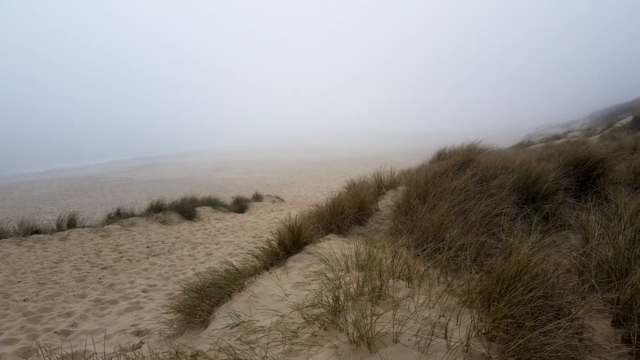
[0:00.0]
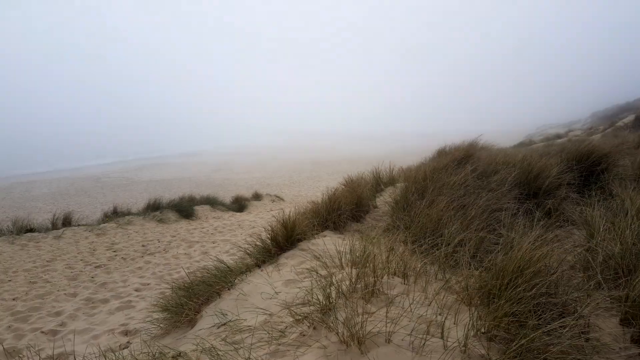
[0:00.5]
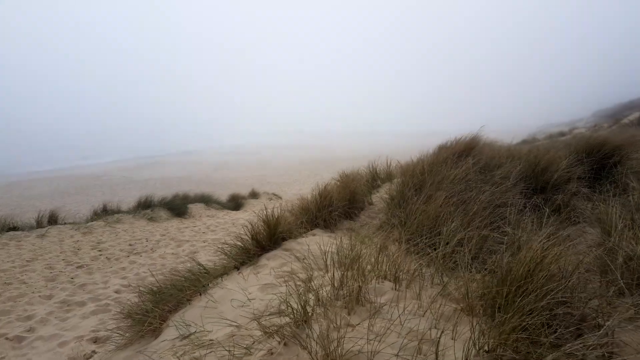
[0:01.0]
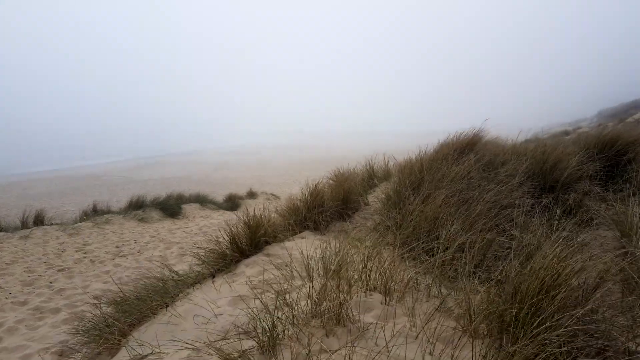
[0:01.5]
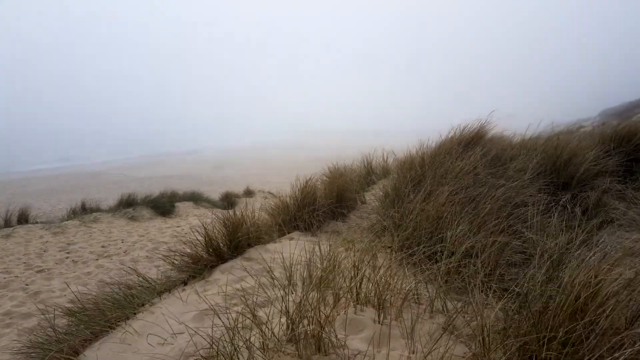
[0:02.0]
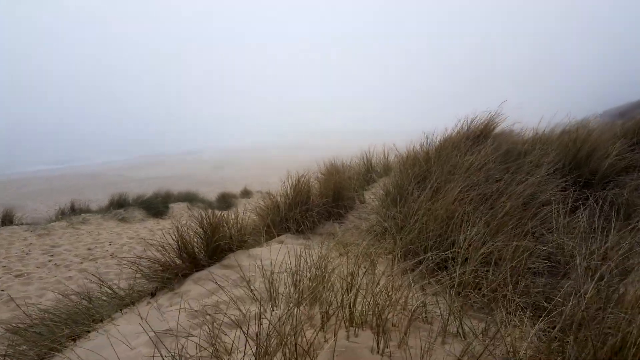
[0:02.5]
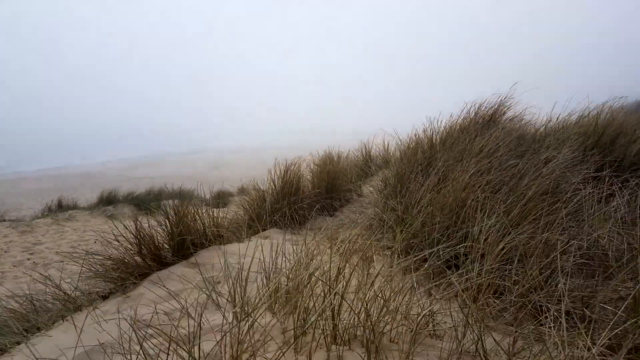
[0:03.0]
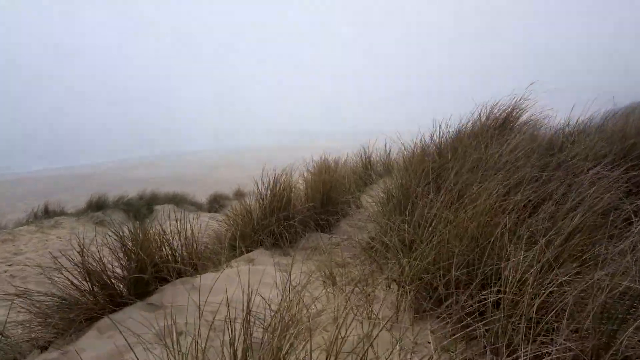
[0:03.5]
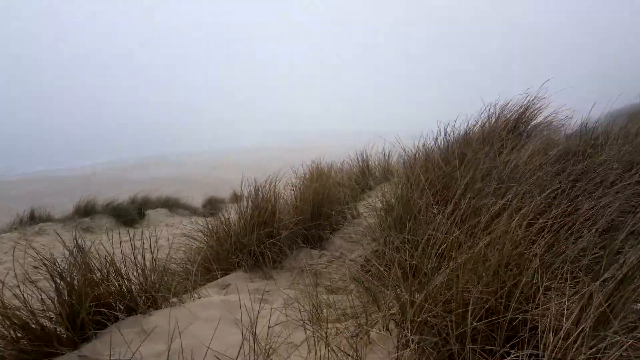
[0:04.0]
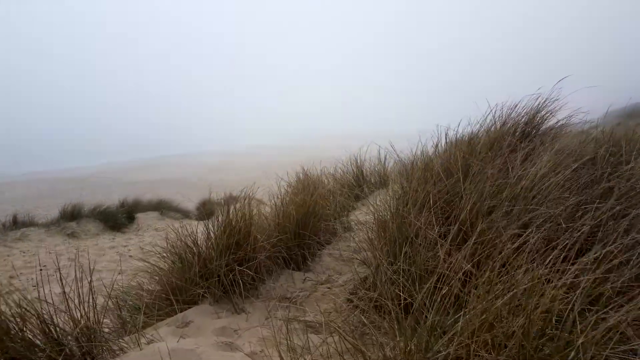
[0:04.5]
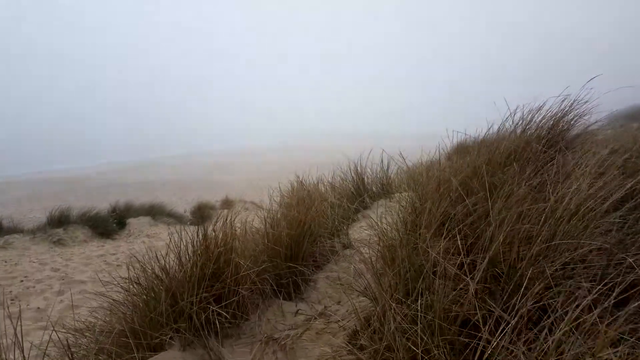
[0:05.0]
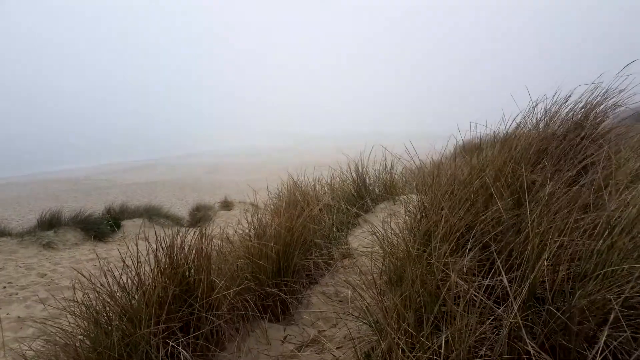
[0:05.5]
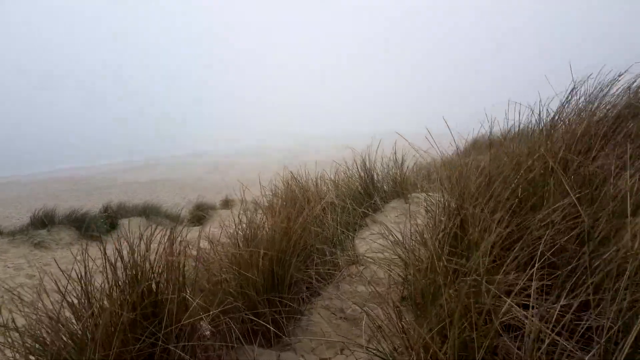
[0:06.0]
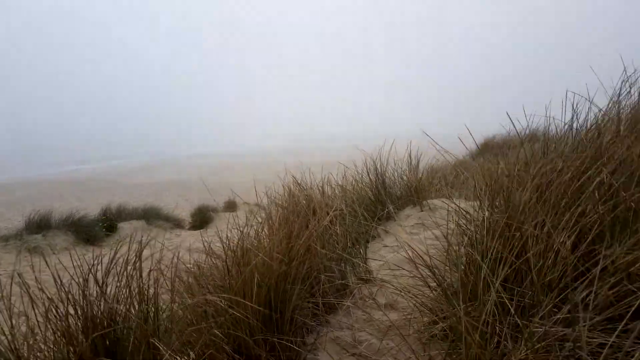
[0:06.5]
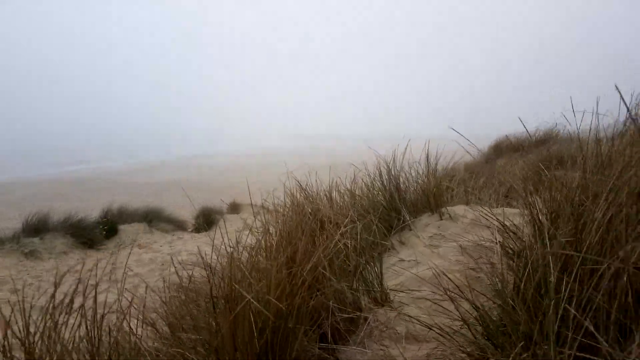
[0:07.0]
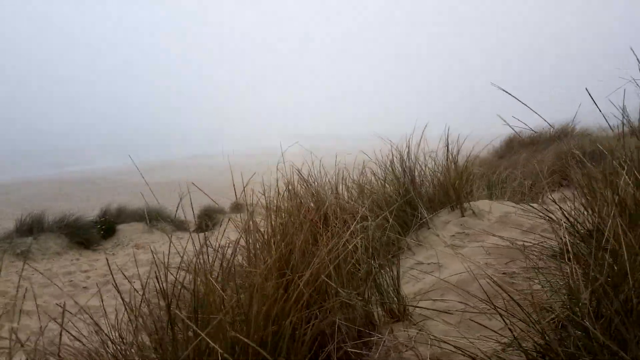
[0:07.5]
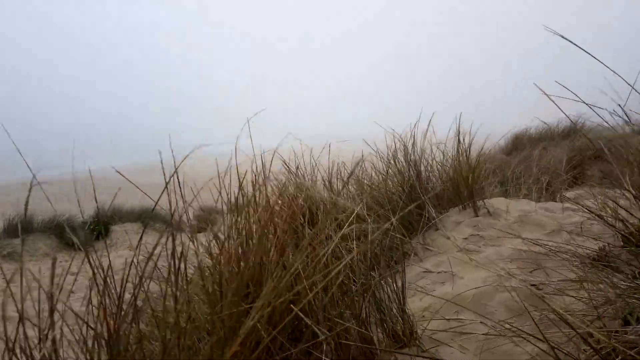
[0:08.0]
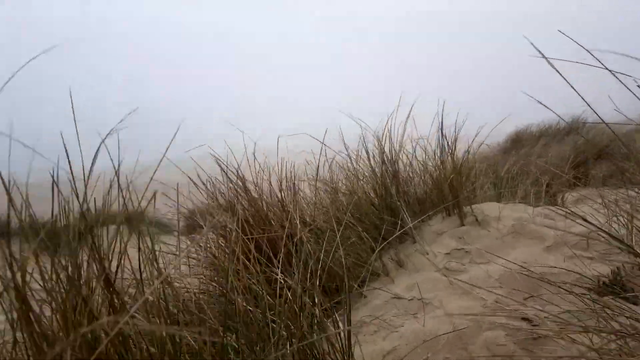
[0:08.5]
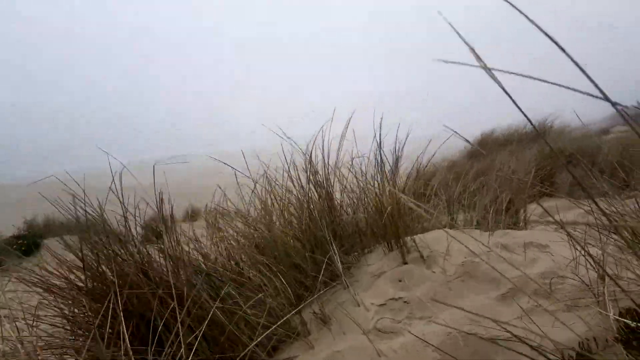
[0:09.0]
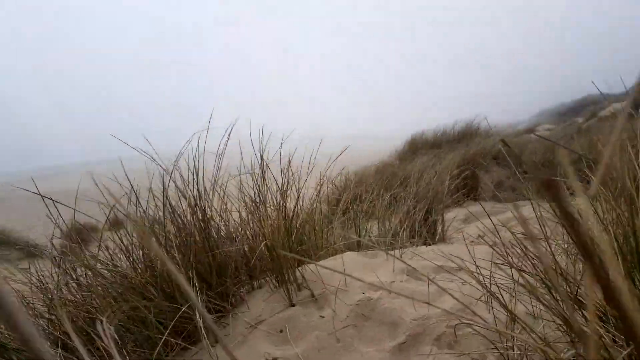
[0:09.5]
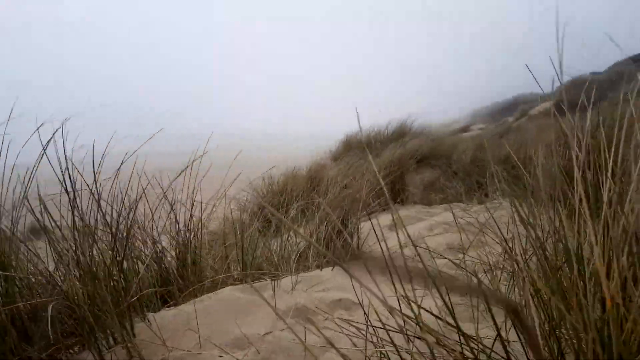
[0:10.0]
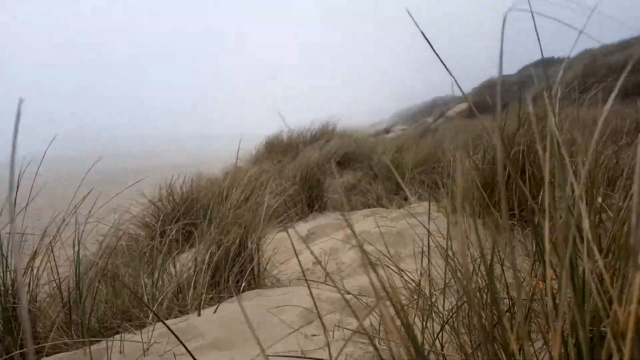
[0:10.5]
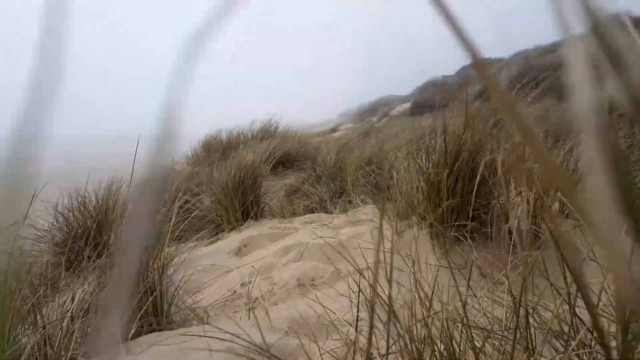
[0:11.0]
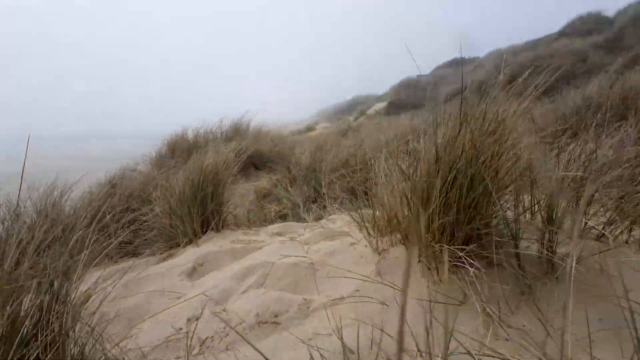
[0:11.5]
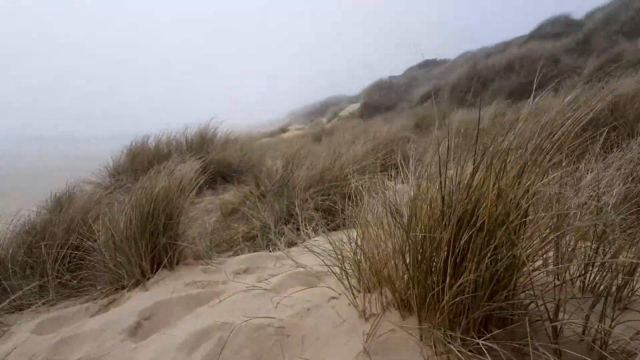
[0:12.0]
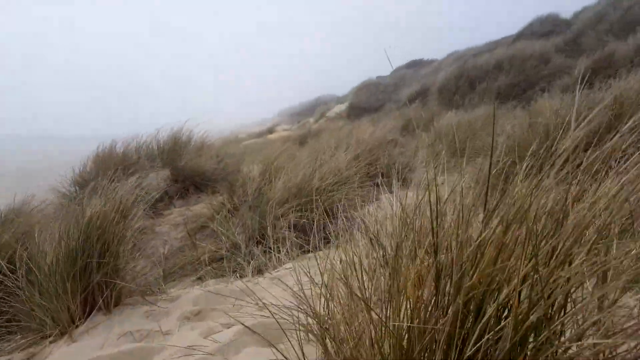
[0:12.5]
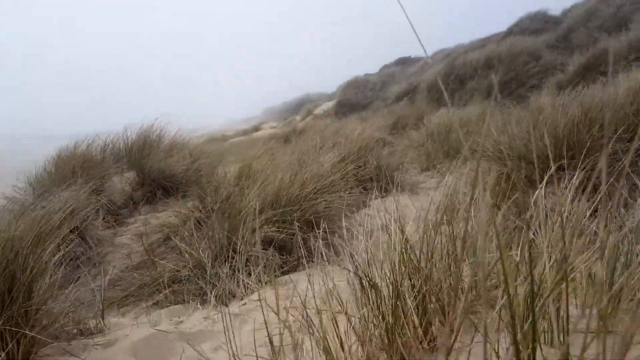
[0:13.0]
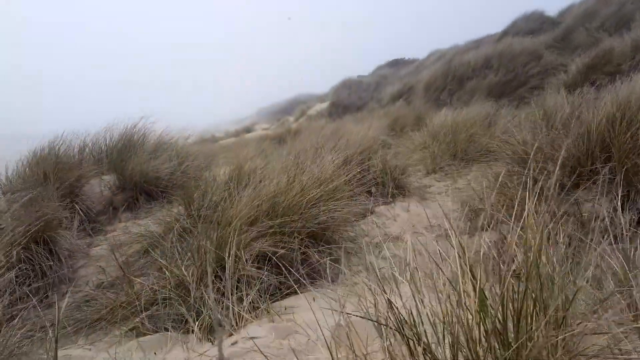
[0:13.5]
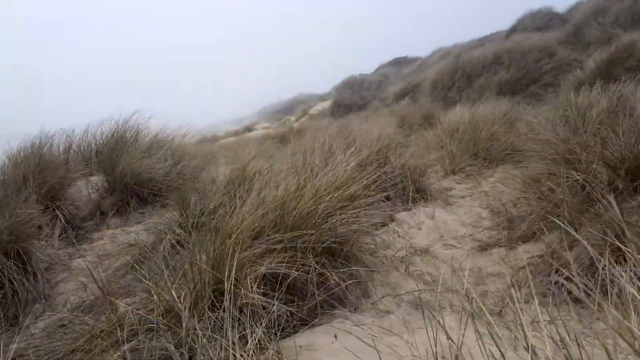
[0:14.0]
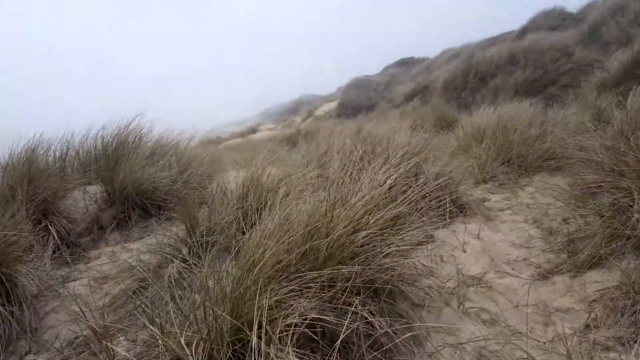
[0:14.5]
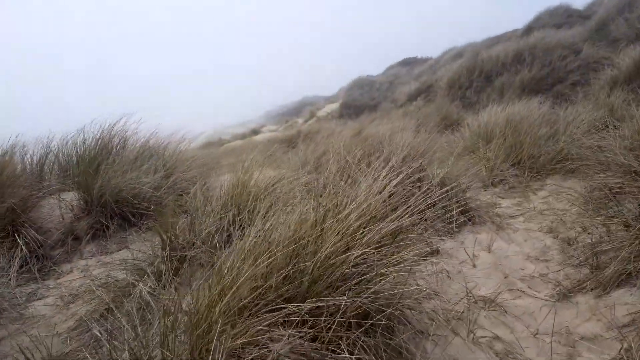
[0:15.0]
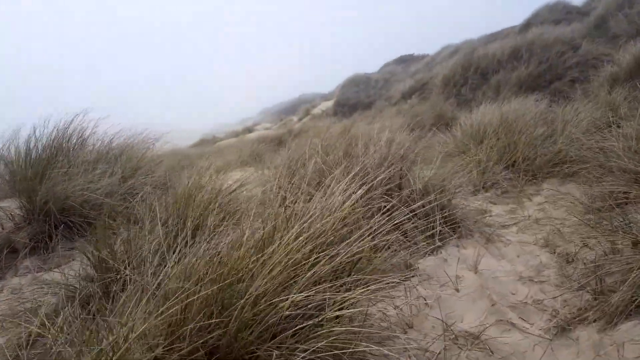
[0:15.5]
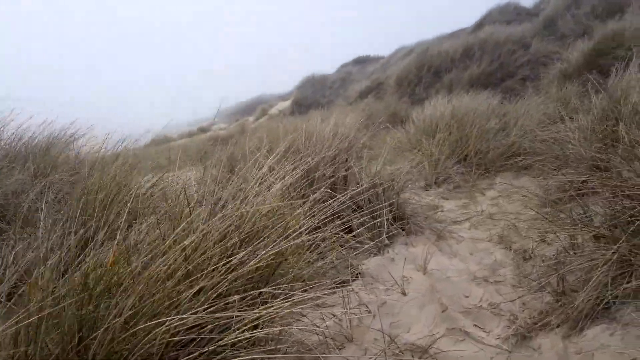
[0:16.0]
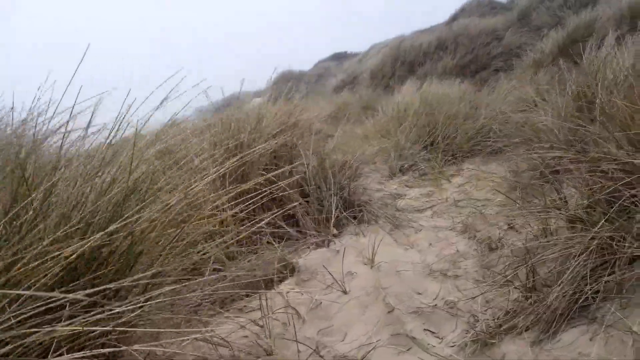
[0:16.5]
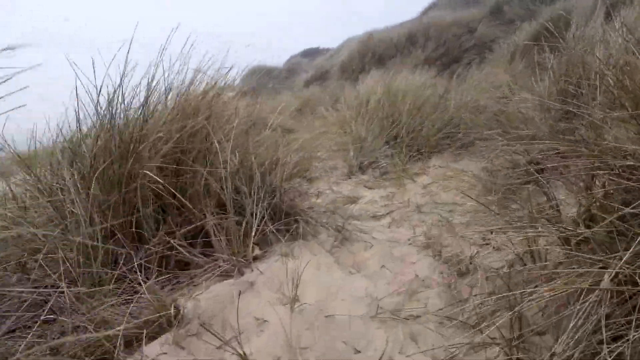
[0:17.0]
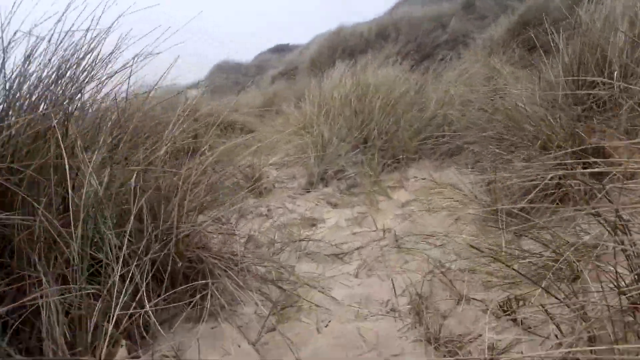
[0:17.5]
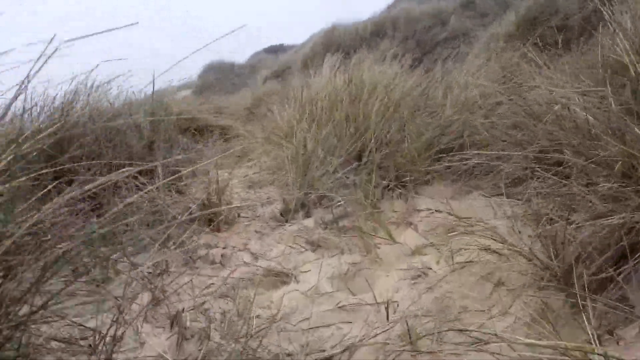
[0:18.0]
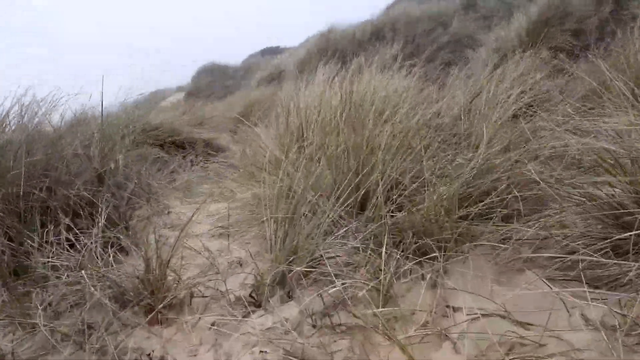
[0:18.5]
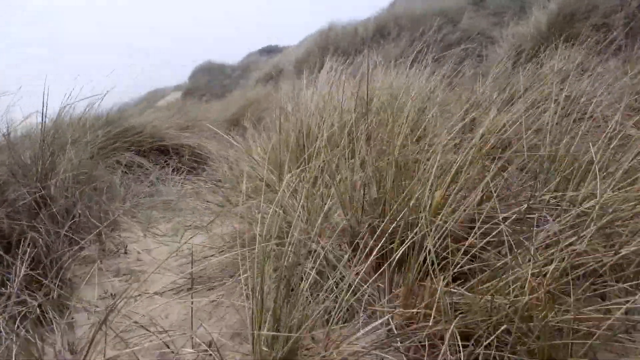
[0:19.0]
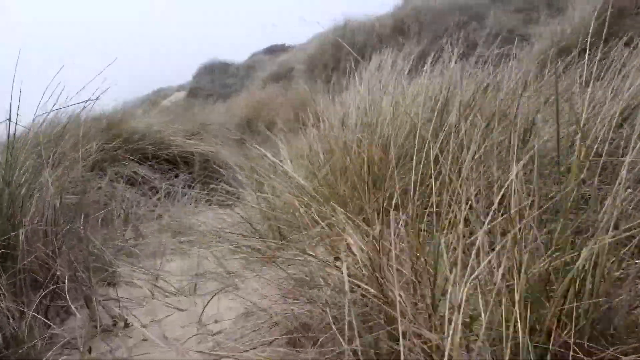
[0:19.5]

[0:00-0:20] The video opens on a sandy beach with no clear horizon, though some waves are possibly visible in the background. It is an extremely foggy, grey day and the mist is very prominent, so visibility extends only about 10 to 20 meters beyond the camera. Dunes appear, mostly sand, with a good part of them covered in dead grass or twiggy bushes that are very low to the ground and mostly brown, grey, beige or withered; those closer to the sea are perhaps a bit greener. The cameraman moves very low to the ground, almost crouching, through tiny grass tufts, panning relatively quickly through the dead and withered vegetation of the dunes, which are not too high and are close to the sea.